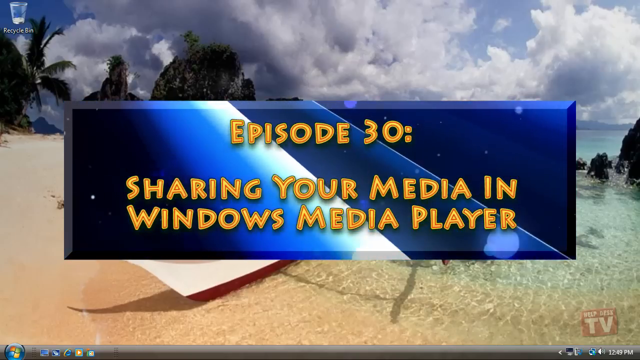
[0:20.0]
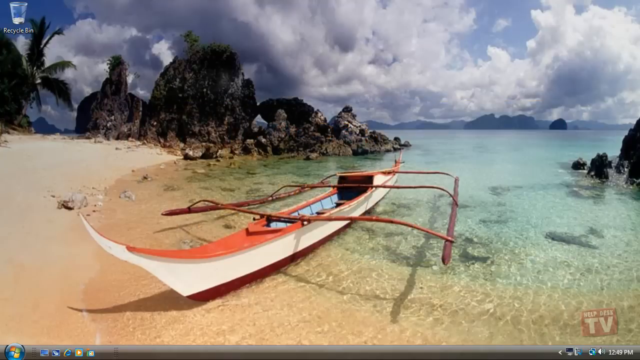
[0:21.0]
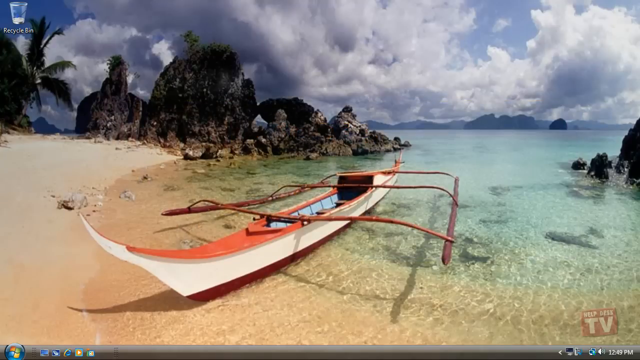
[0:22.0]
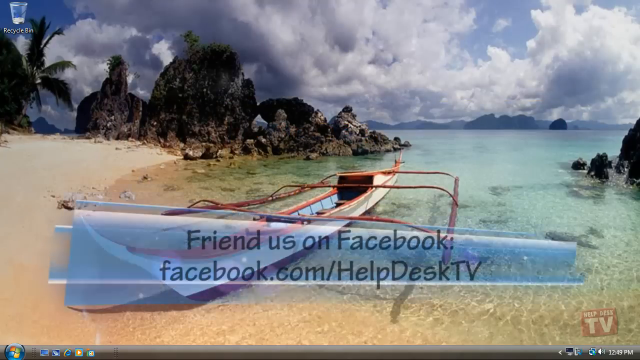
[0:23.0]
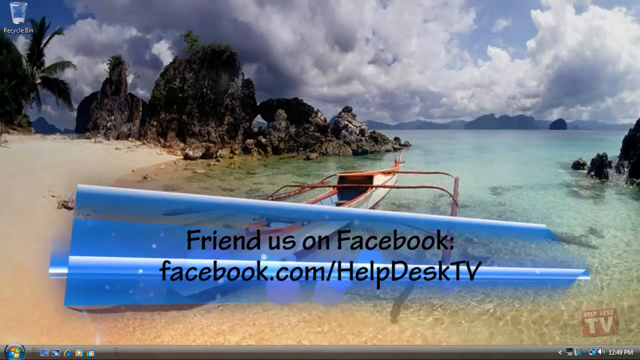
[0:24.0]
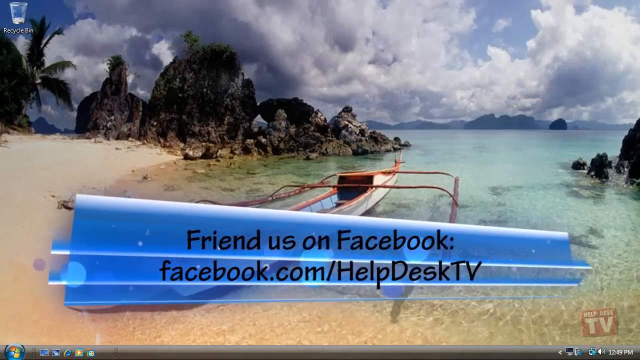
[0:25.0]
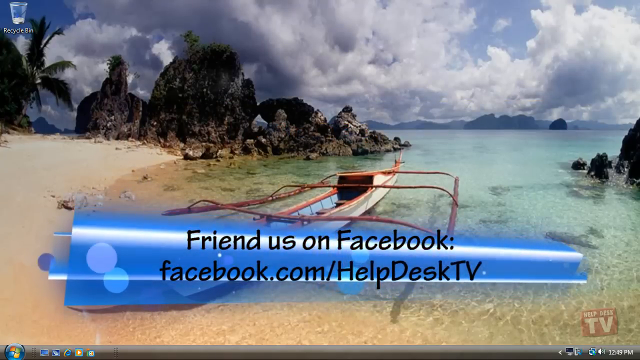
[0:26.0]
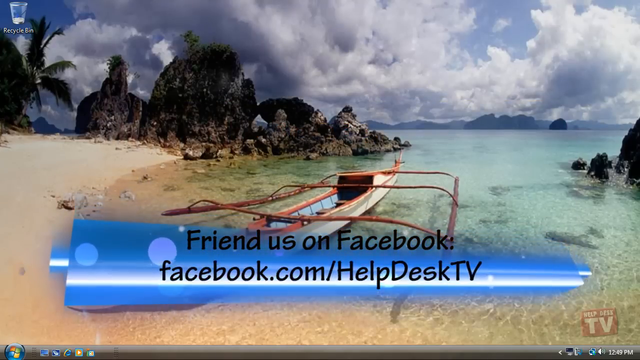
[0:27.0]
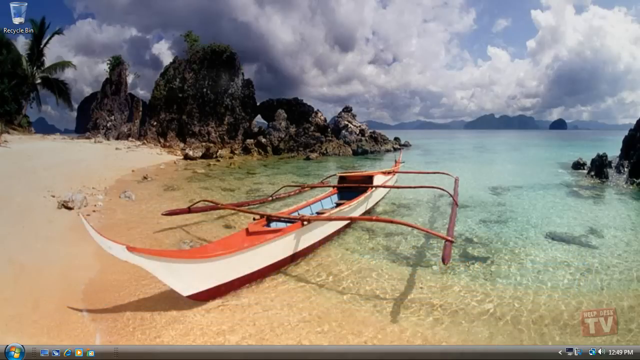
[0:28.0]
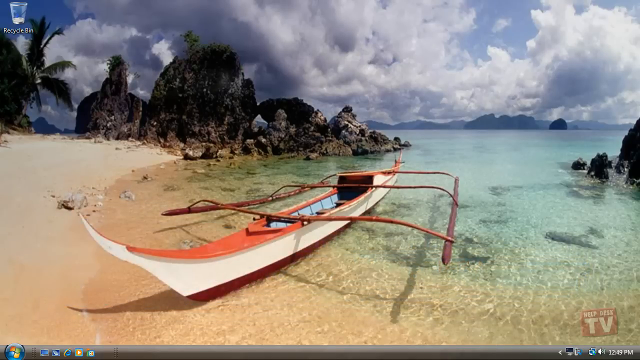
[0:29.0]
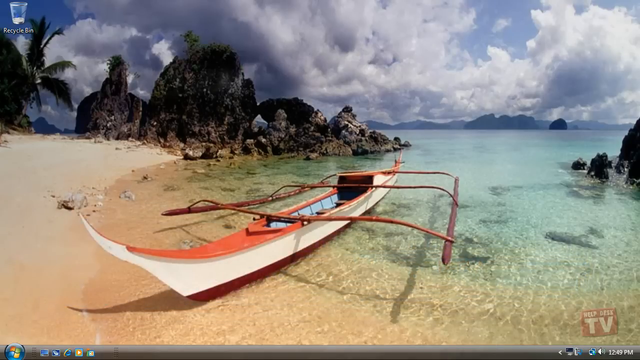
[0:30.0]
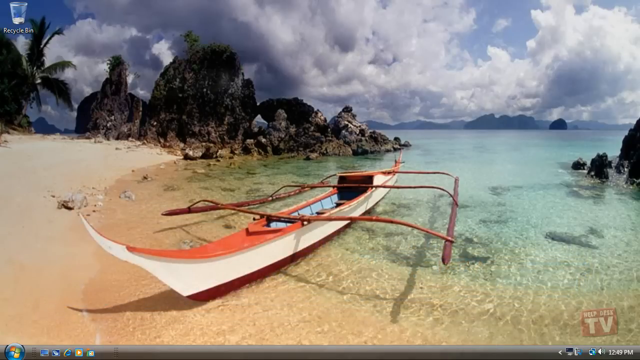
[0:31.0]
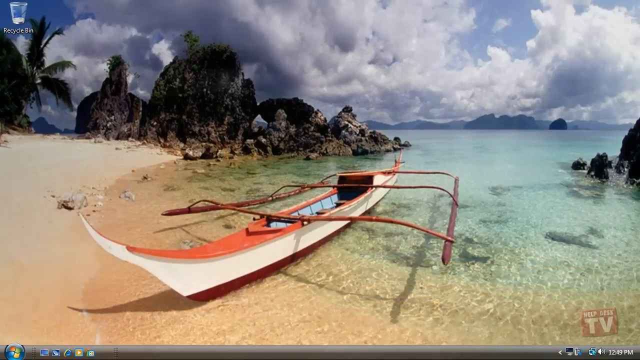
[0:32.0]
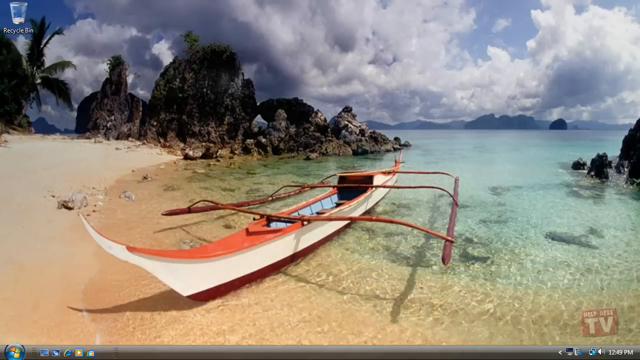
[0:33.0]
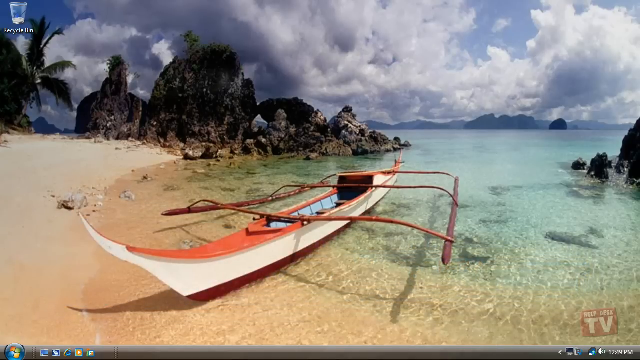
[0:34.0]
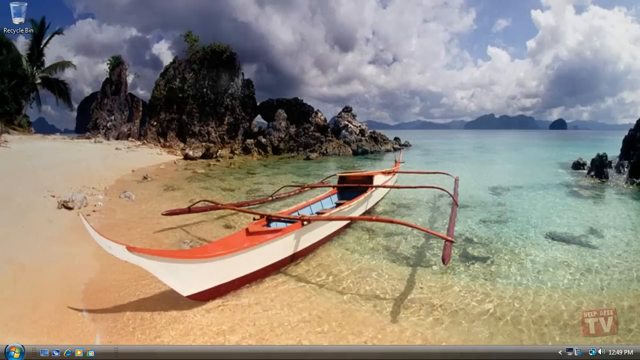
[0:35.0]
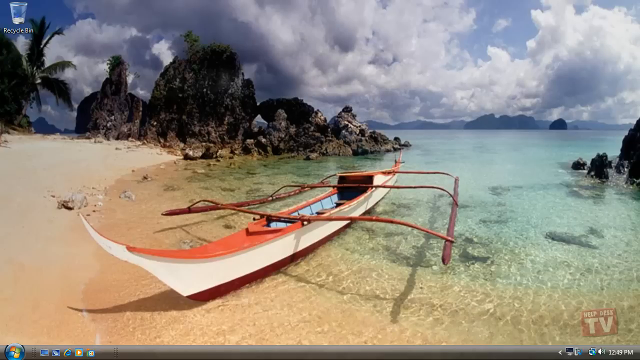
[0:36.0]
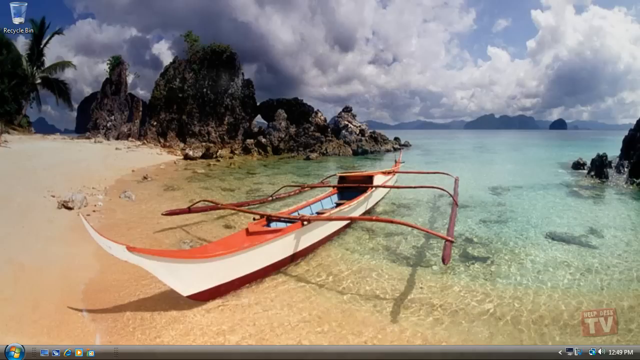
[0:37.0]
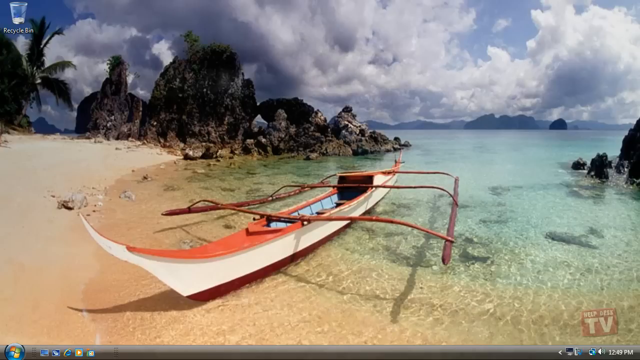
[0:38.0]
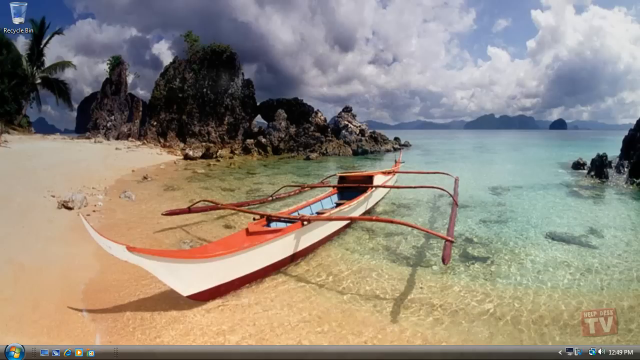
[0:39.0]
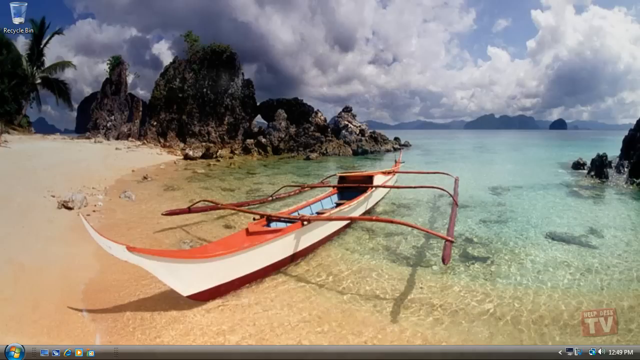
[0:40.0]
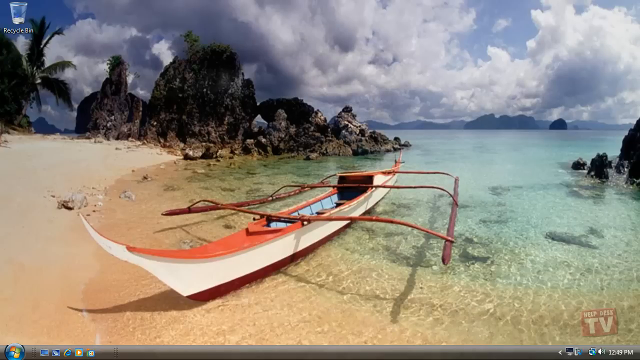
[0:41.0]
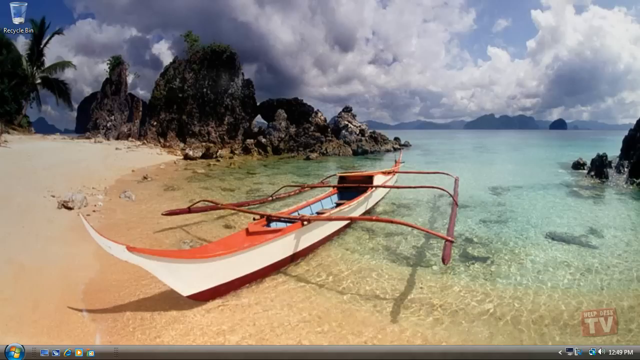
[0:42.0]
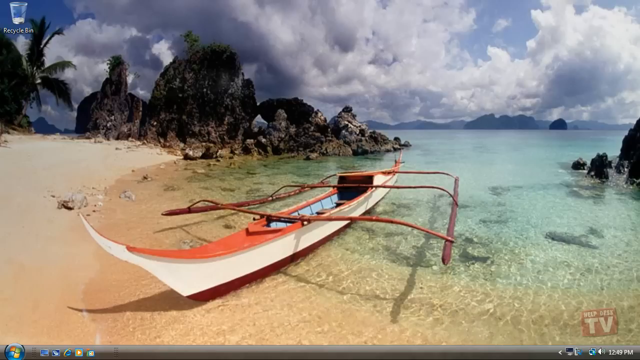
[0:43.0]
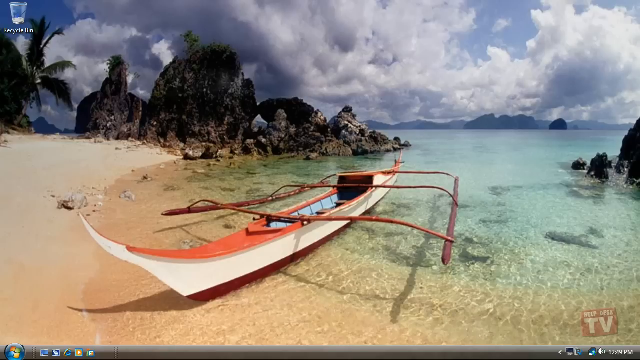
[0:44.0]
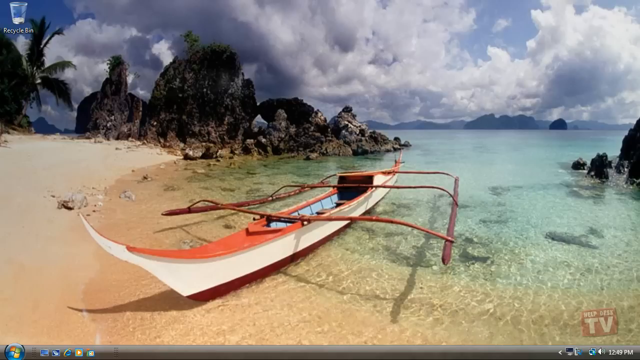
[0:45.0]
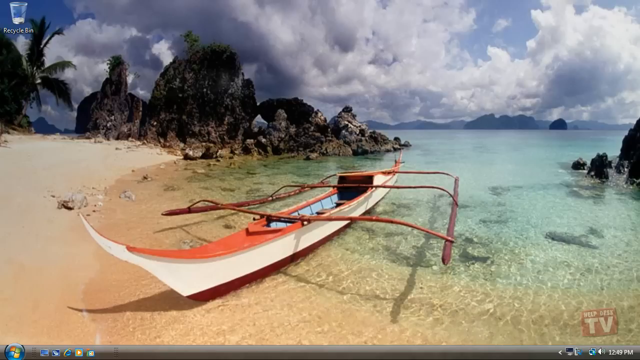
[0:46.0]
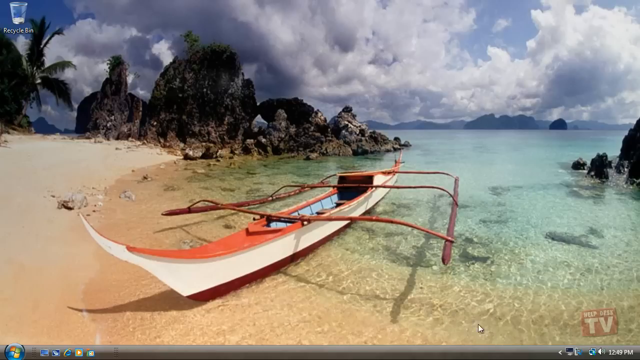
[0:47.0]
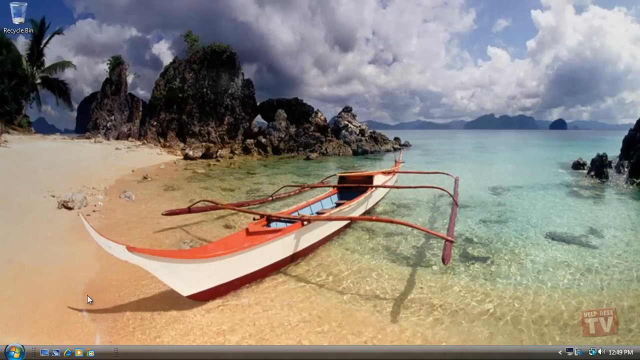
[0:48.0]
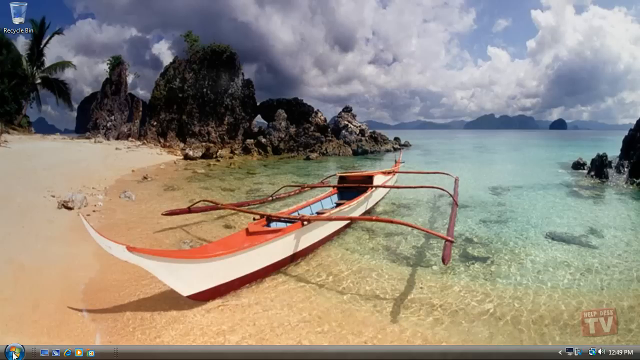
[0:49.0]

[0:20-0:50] The blue pop-up reading "episode 30, sharing your media in Windows Media Player" stays up for a couple of seconds and then disappears, leaving the desktop background of the boat in the bay at the island. Another pop-up then appears at the bottom of the screen: a small animated banner that looks sort of like waves, saying "friend us on Facebook" along with the Facebook page address "facebook.com/helpdesktv". After a couple of seconds it goes away and the background is shown with nothing much happening. Icons like those of a regular Windows desktop are at the bottom of the screen, and the cursor moves to the Start button in the bottom left corner. In the bottom right corner is a small, transparent red square, like a watermark, that says "help desk TV".